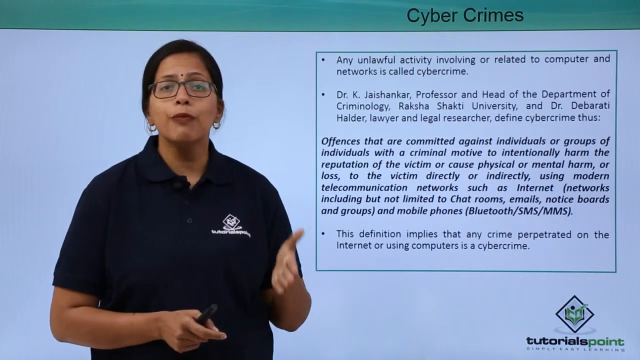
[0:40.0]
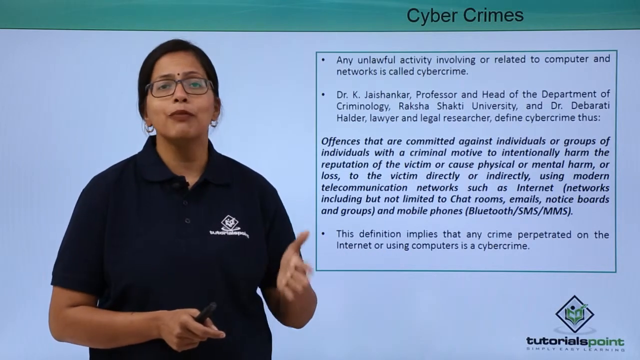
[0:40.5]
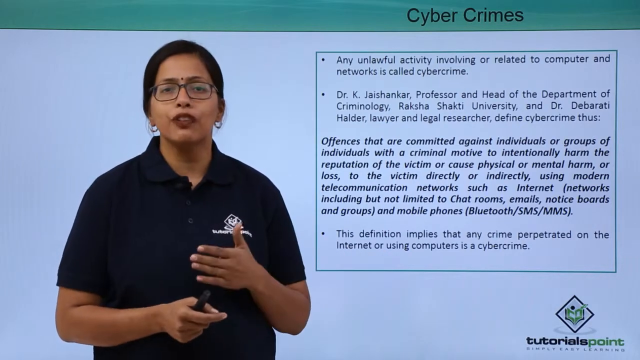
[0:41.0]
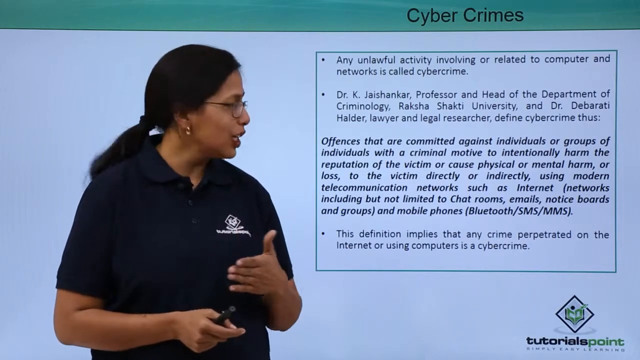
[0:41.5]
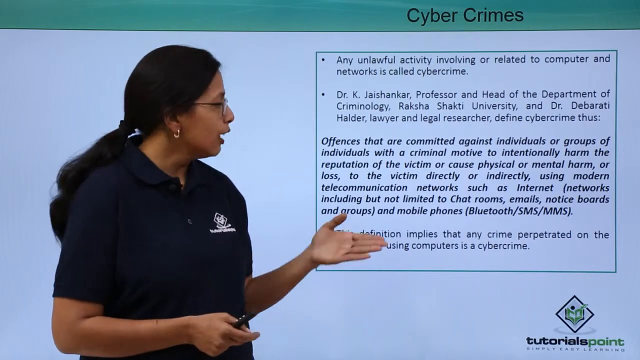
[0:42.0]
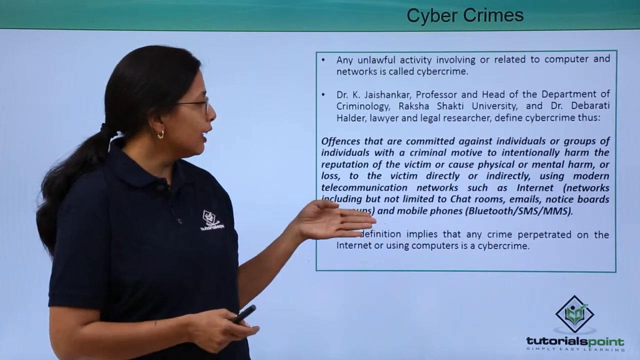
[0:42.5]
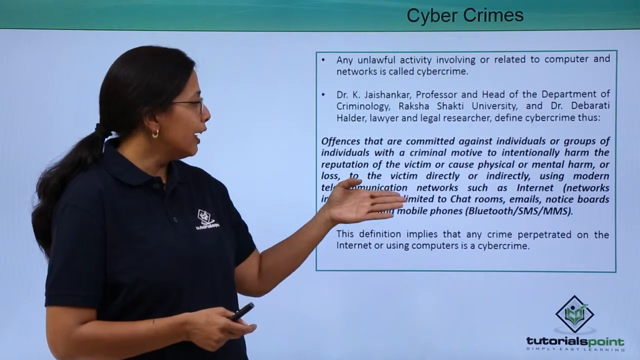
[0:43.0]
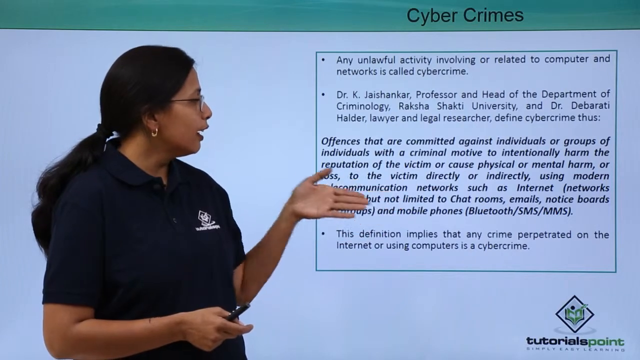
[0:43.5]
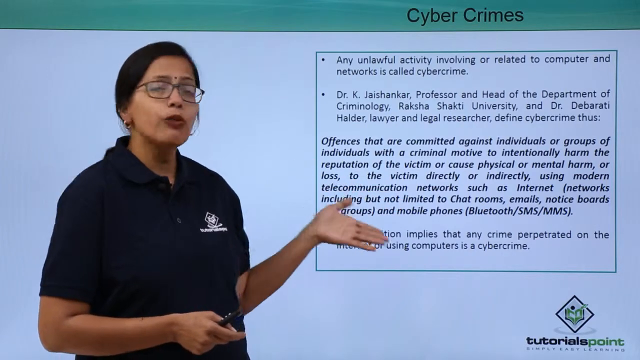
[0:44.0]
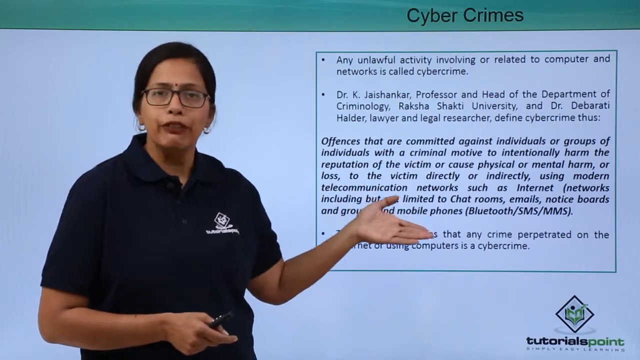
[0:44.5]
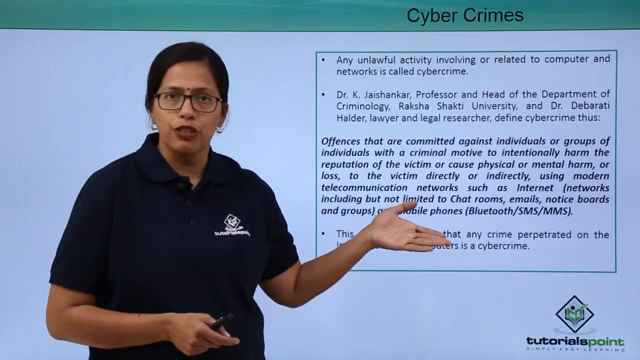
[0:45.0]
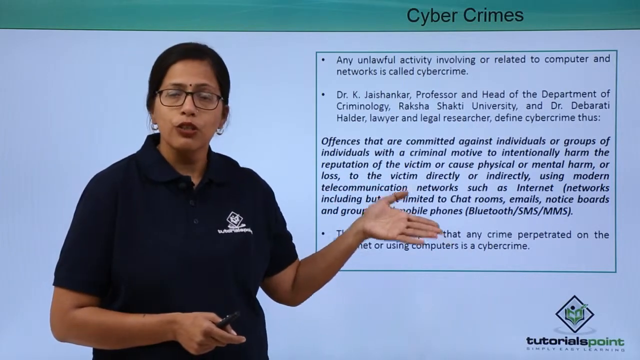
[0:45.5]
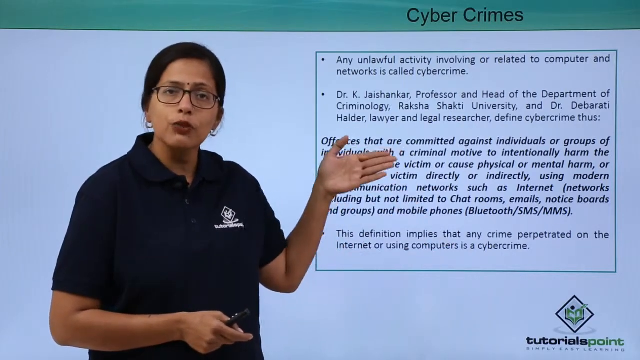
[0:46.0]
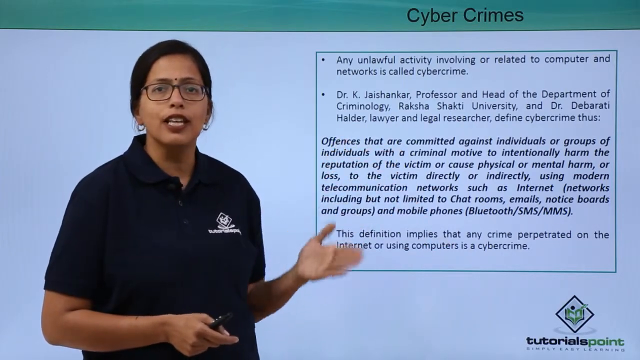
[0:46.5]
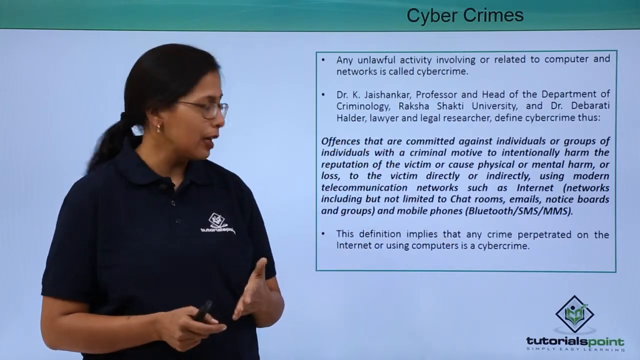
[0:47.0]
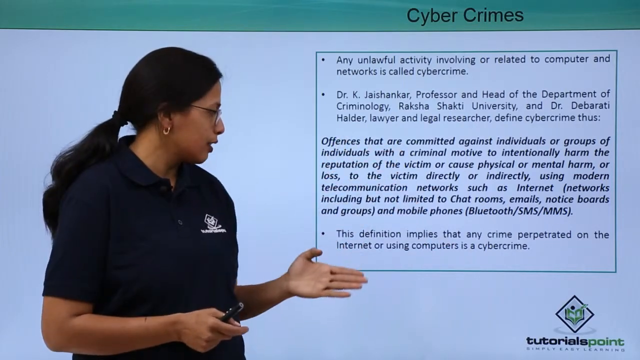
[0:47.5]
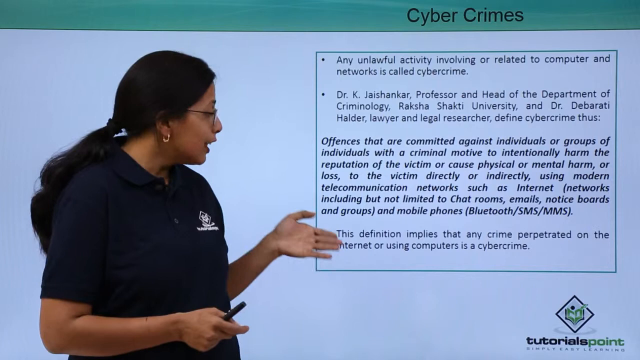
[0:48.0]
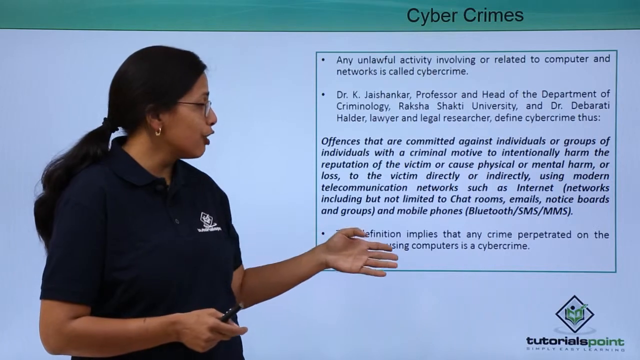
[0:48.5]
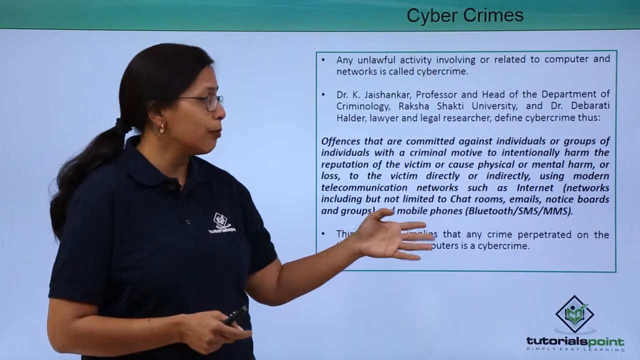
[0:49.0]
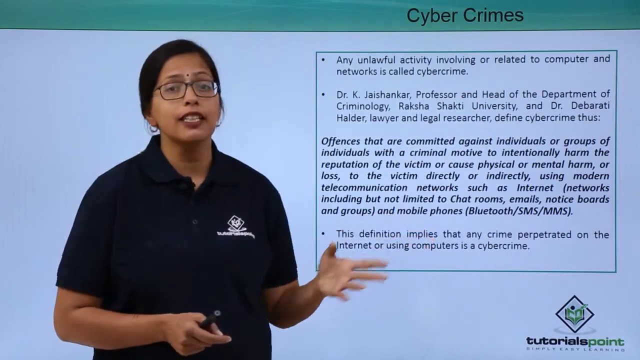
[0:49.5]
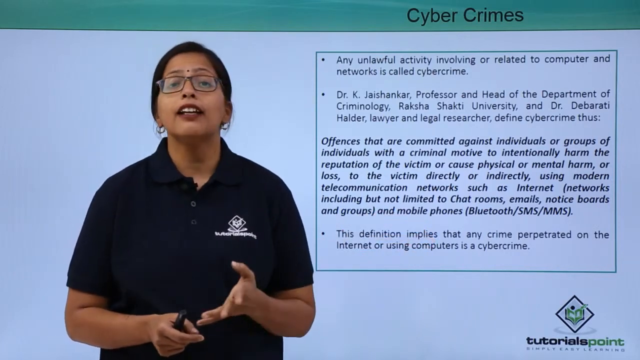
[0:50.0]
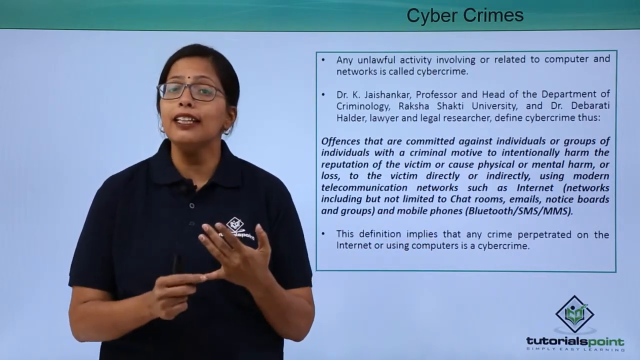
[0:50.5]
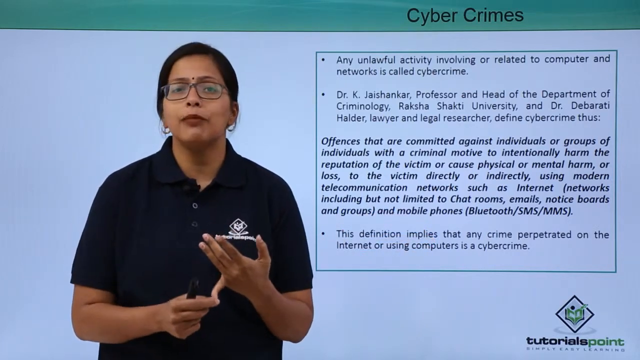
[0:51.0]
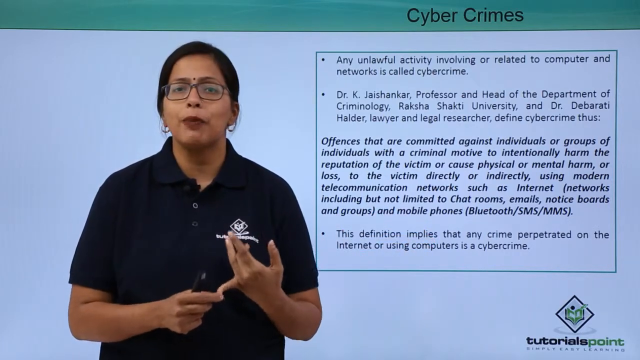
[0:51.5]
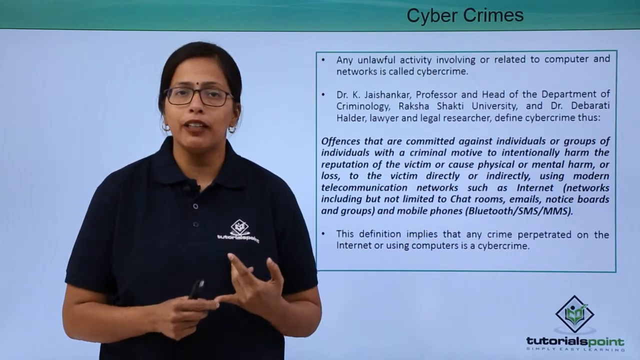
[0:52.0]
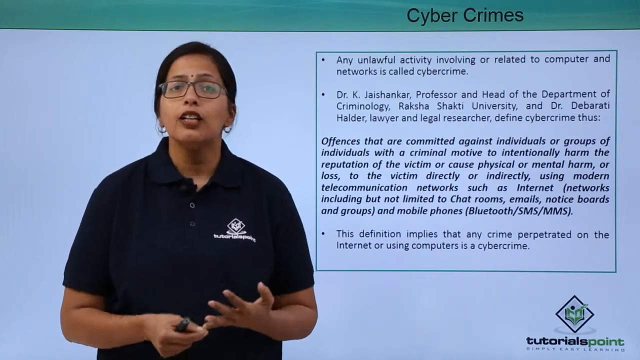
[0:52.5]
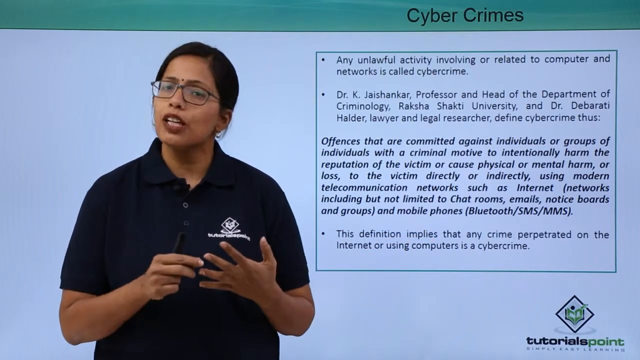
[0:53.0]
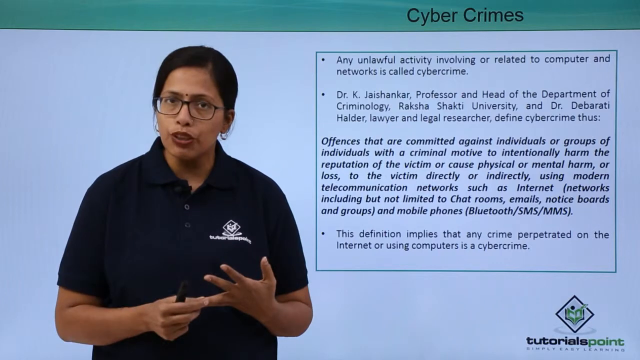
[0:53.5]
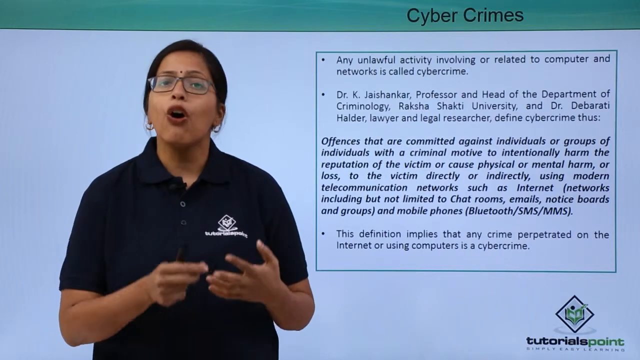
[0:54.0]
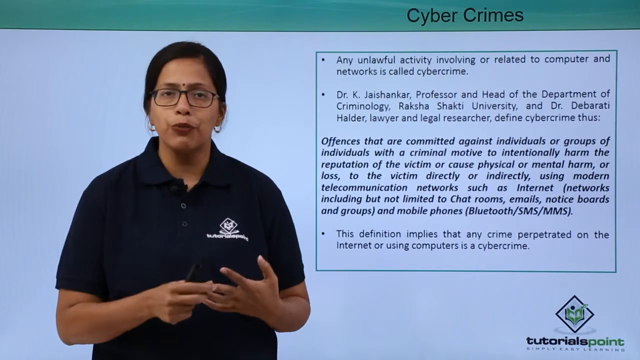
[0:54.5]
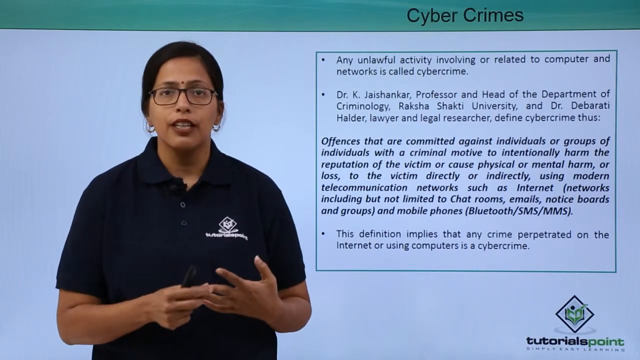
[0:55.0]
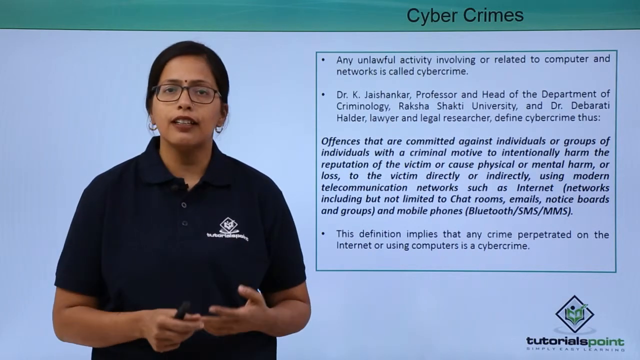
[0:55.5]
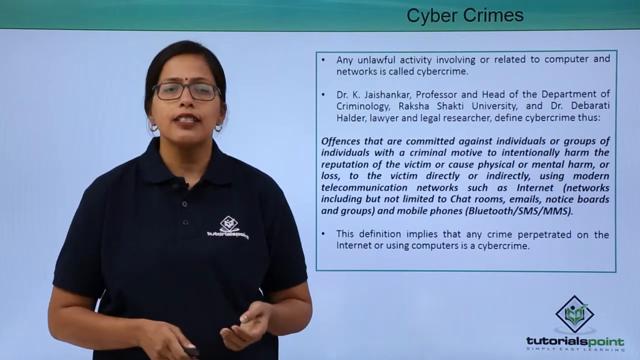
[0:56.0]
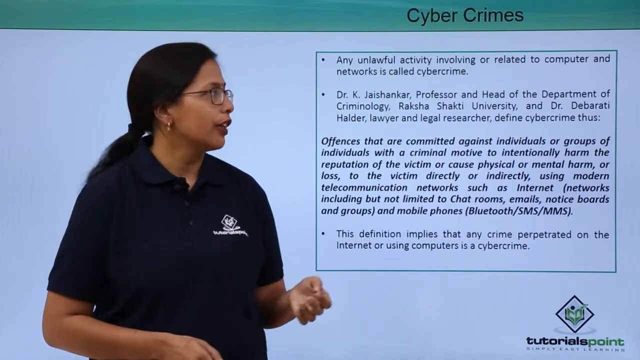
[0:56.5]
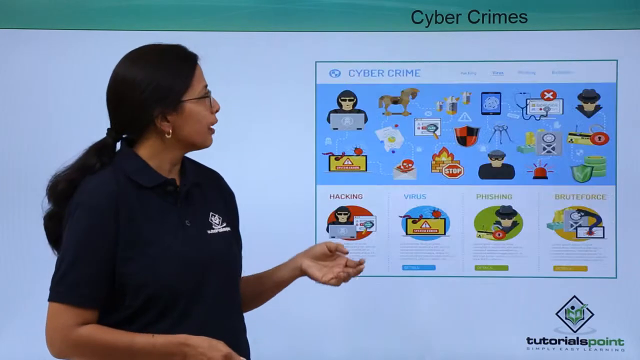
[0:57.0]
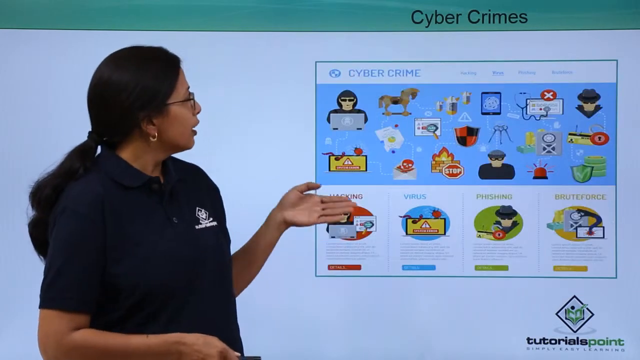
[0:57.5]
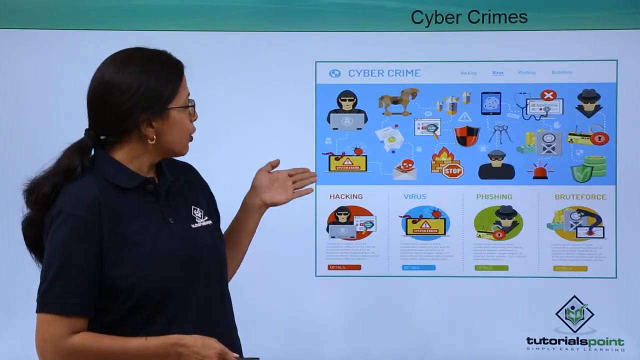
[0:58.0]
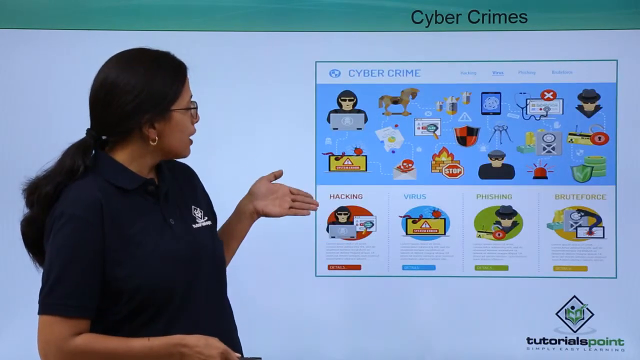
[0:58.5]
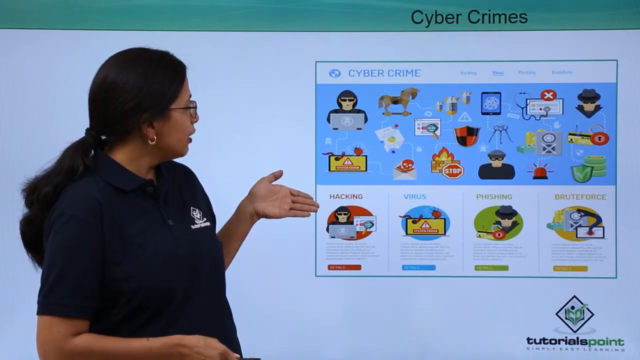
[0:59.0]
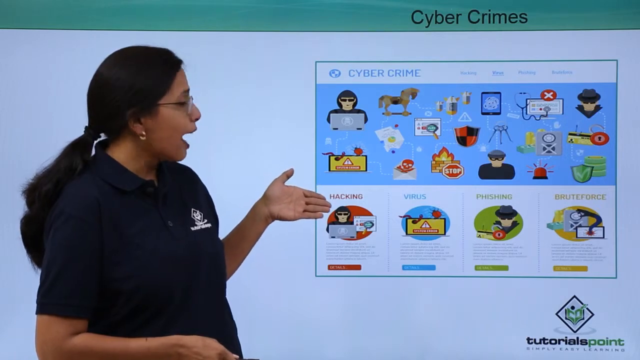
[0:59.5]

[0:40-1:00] The Indian female lecturer for Tutorials Point continues with the definition of cybercrimes, pointing at the whiteboard while talking to the students. She moves on to the second slide, which shows various types of cybercrimes in columns. Hacking is written in red, with an individual on a laptop holding a magnifying glass over some code. Virus is in the second column, shown in blue, with a warning sign and a virus. Phishing is in the third column, represented in lime, with a man who is covered up. The last column is brute force, represented in yellow.